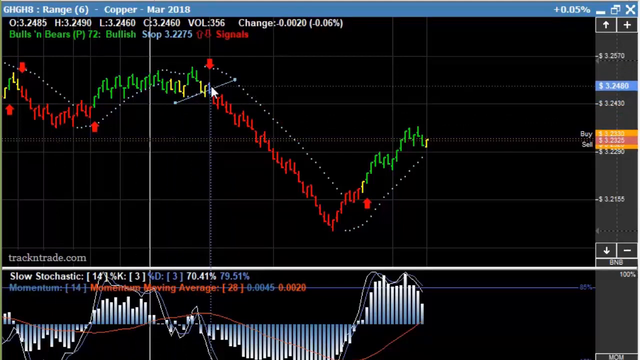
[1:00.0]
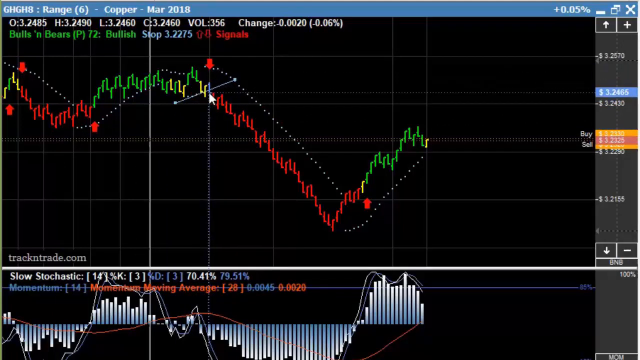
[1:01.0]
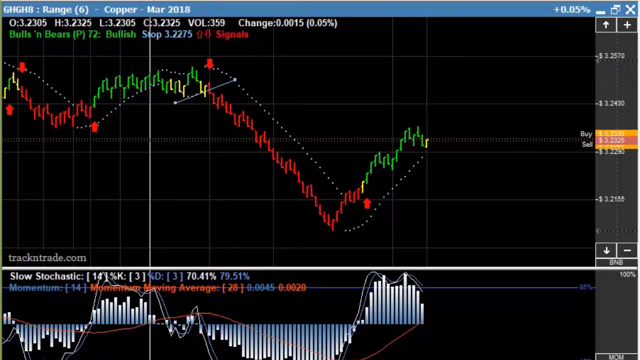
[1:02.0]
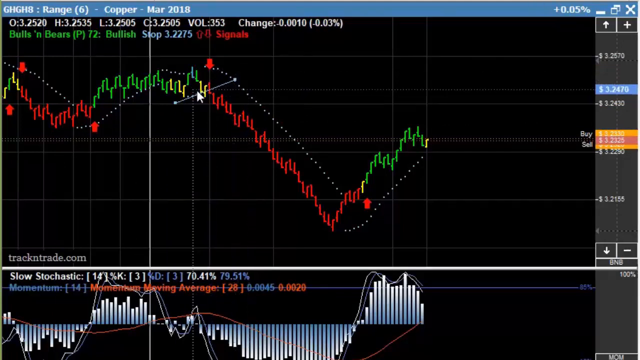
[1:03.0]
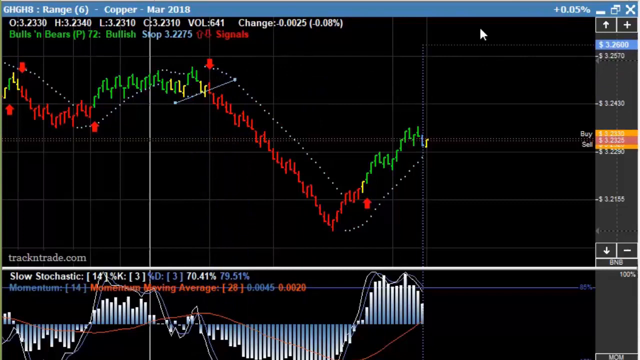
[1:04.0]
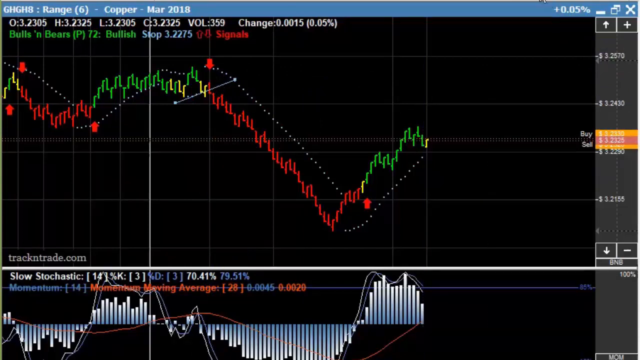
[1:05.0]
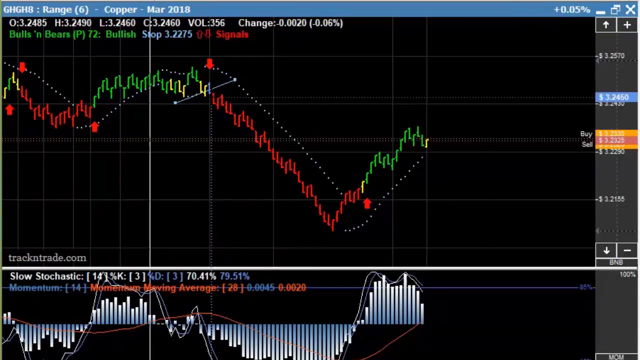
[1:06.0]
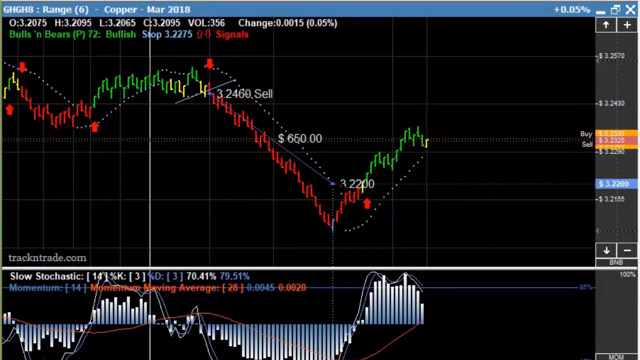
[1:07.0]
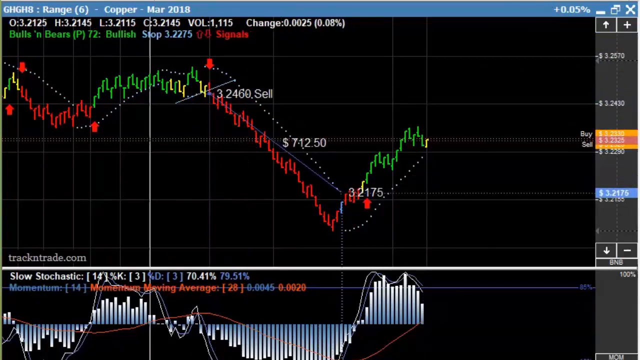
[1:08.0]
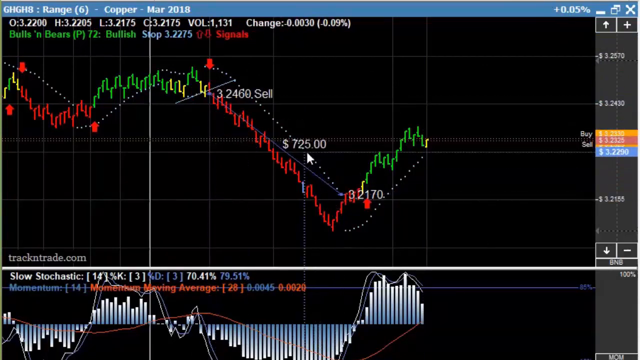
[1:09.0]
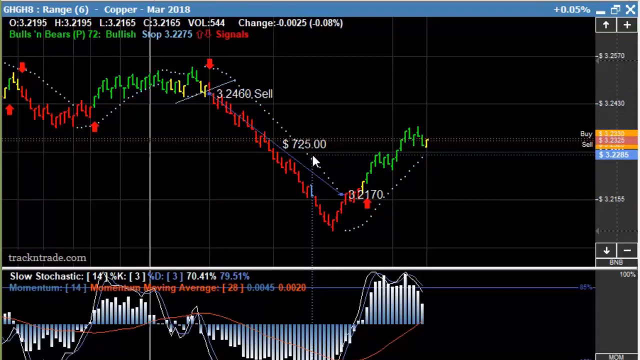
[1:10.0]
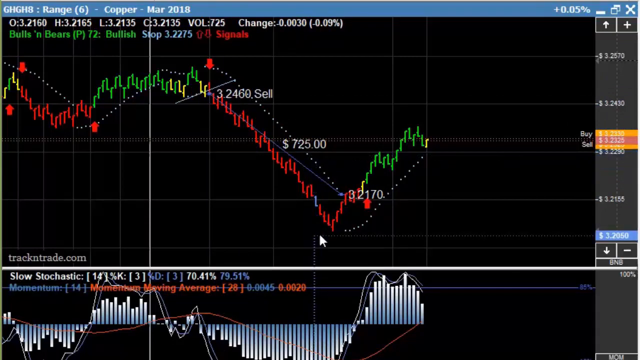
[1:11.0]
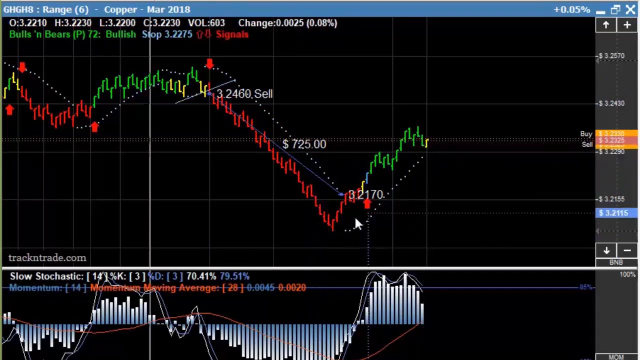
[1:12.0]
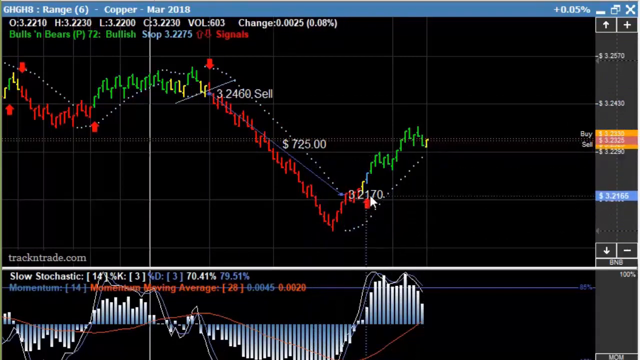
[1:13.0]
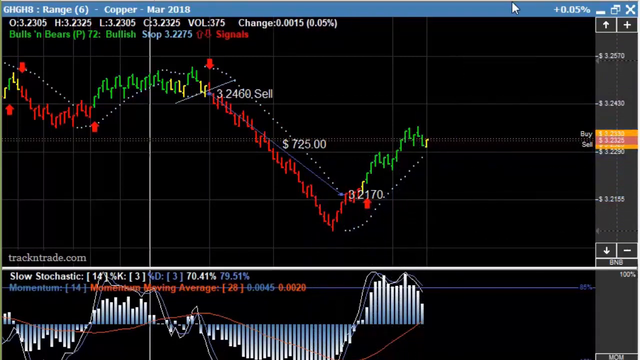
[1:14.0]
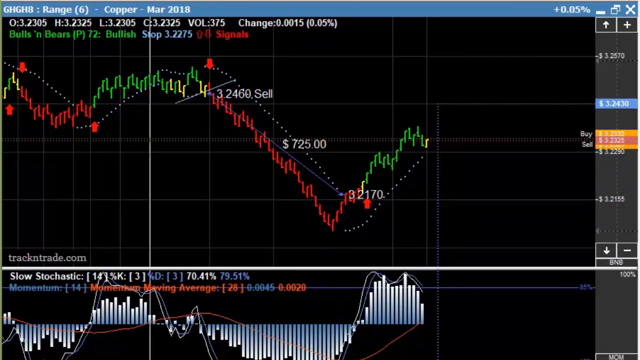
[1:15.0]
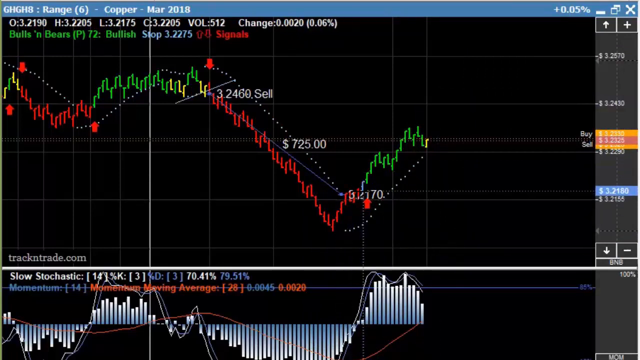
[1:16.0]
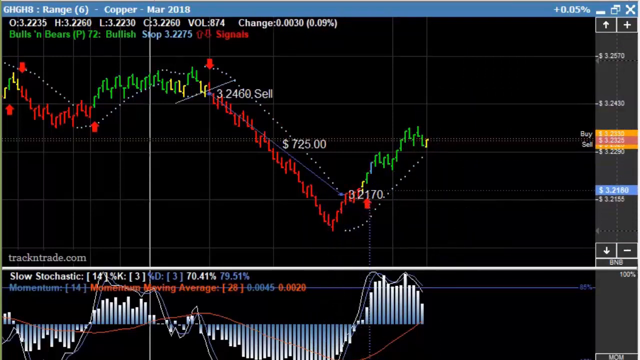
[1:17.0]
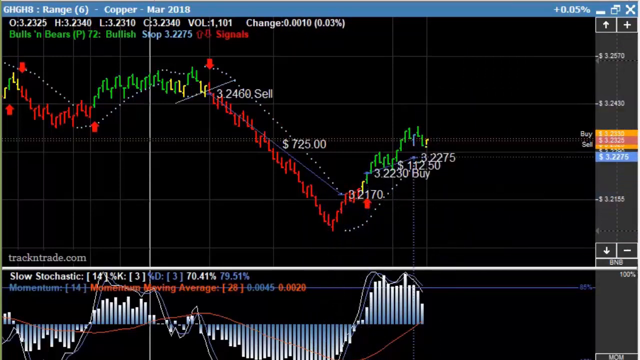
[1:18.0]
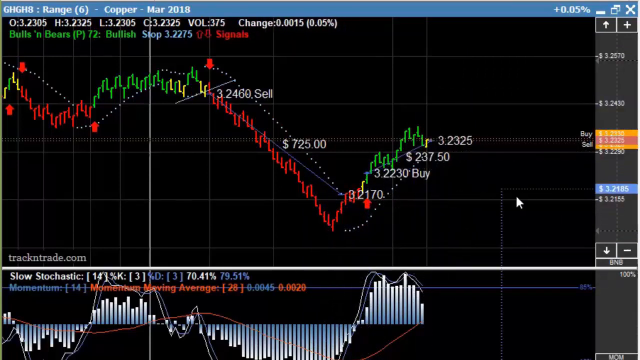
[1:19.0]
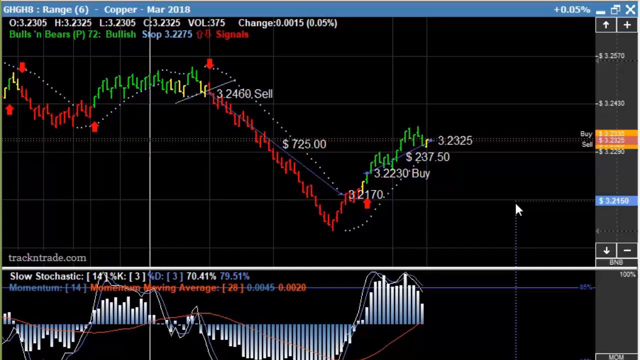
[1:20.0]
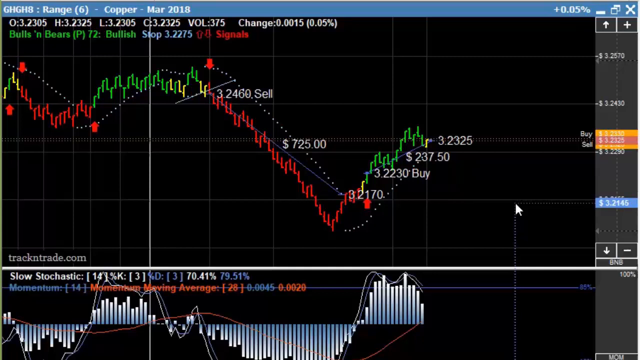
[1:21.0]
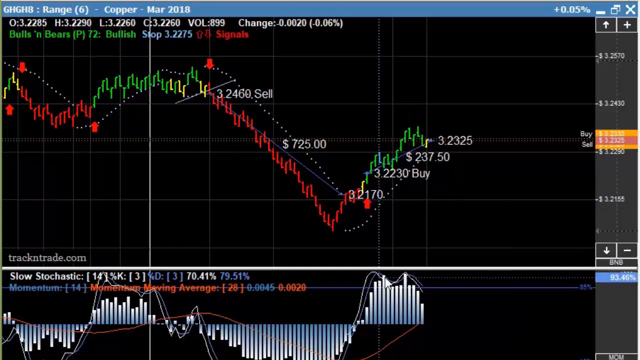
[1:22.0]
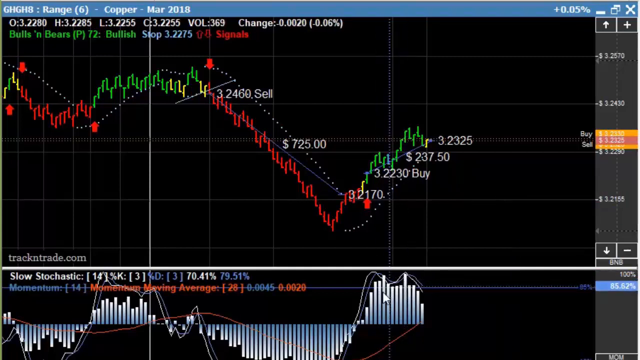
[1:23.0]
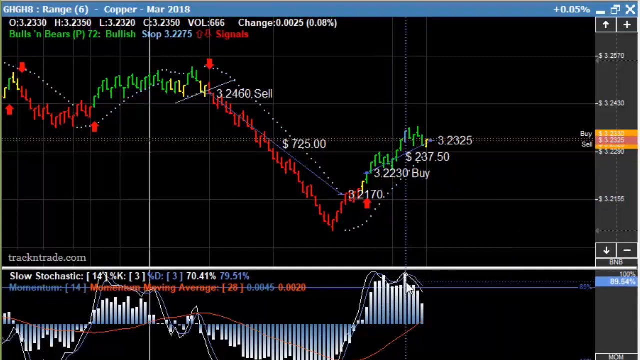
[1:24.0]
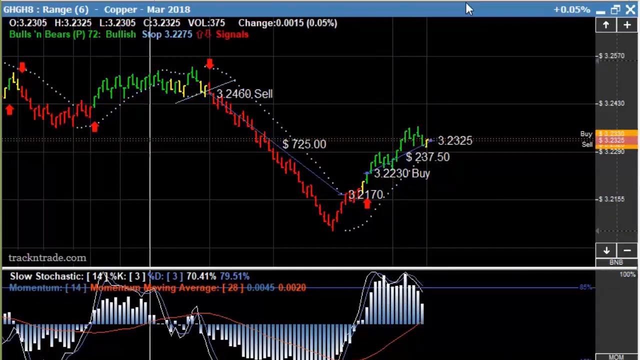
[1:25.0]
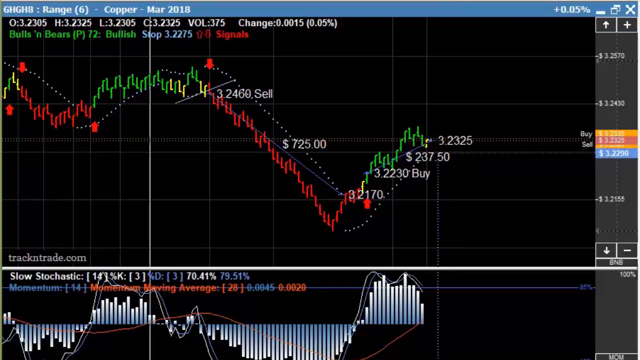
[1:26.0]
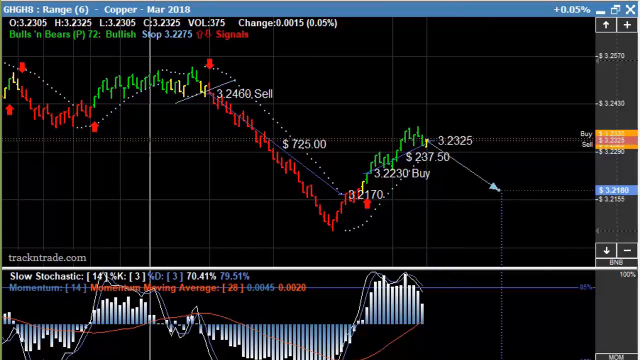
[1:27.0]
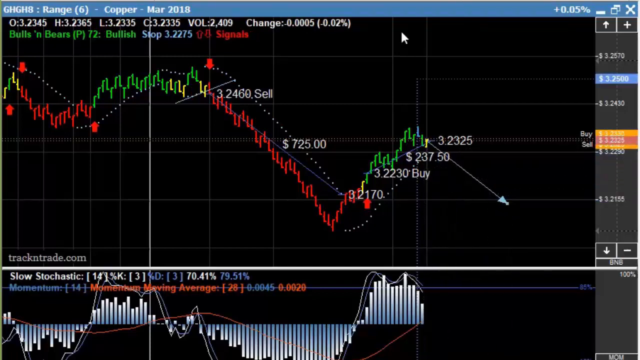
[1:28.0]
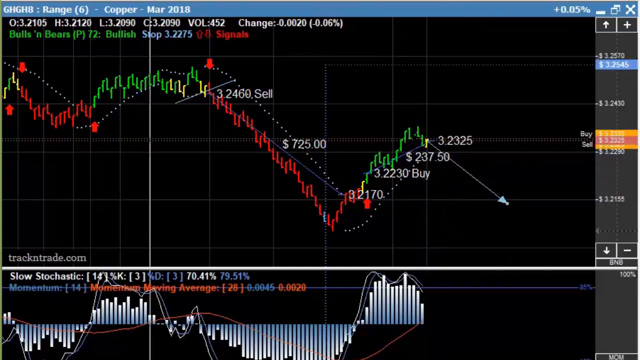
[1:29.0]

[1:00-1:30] The upper three quarters of the screen is taken up by the top bar and the stock price graph. Below the white line, text reads "slow stochastic: (14) %k: (3)", with something illegible underneath one of the white lines, then "d: (3)", "70.41%" in white, and "79.51%" in purple. The next line reads "momentum (14" in blue. Some red lettering is illegible because another graph overlays it. Then "moving average (28)" appears in red, followed by "0.0045" in blue and "0.0020" in red. All of this is over the wave graph below the stock price ticker. The mouse moves up, down, and around the price line, and prices appear on screen over the red losing end of the graph: "32460 sell" and below it "72500", both in white. The mouse continues tracking up, and on the right side of the screen the blue bar number rises along with the mouse, following its level.